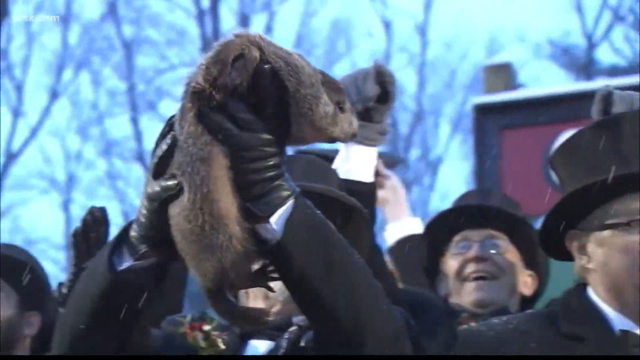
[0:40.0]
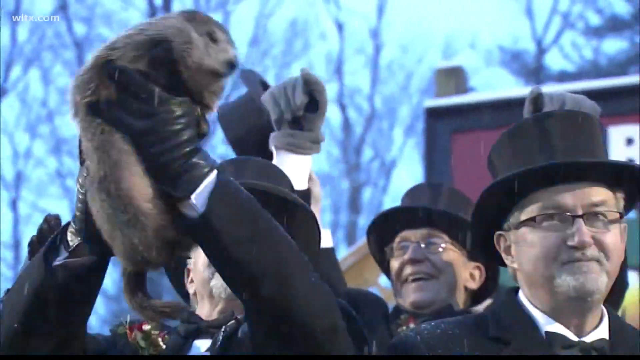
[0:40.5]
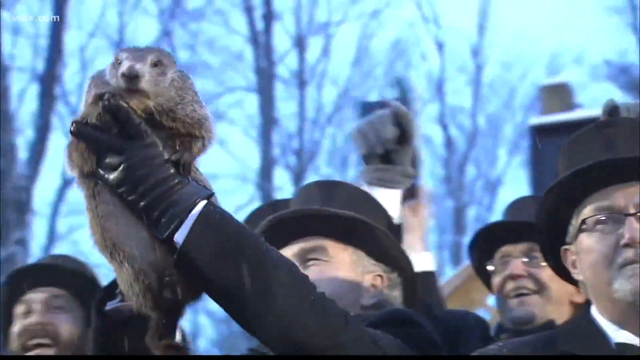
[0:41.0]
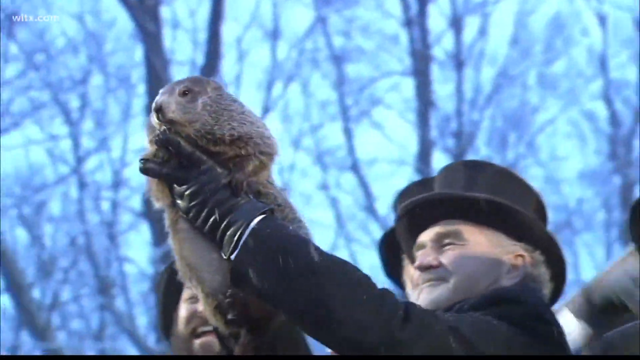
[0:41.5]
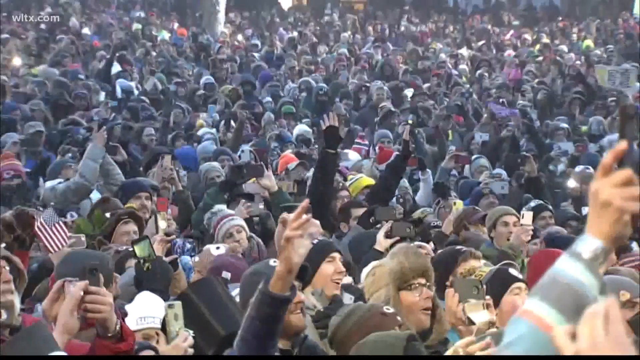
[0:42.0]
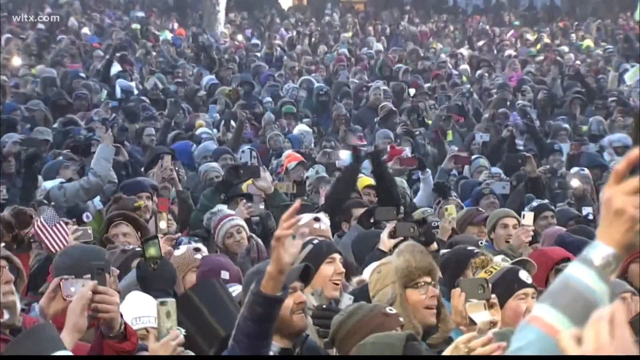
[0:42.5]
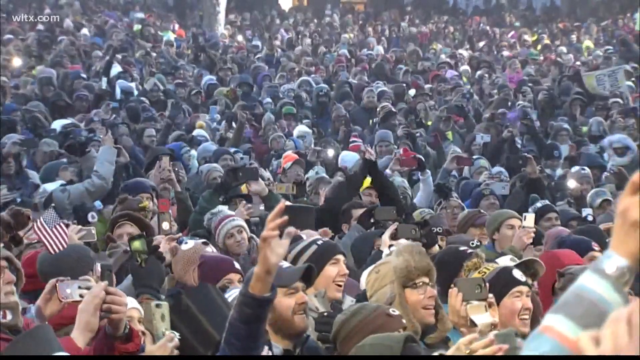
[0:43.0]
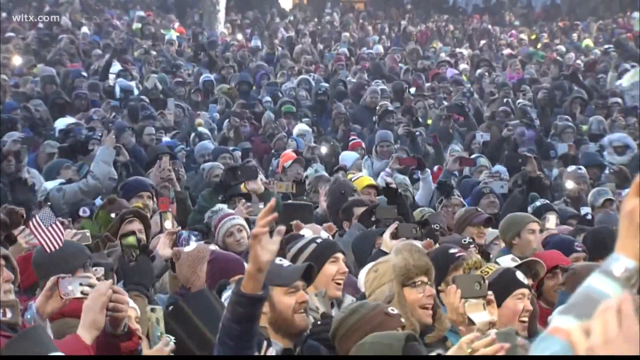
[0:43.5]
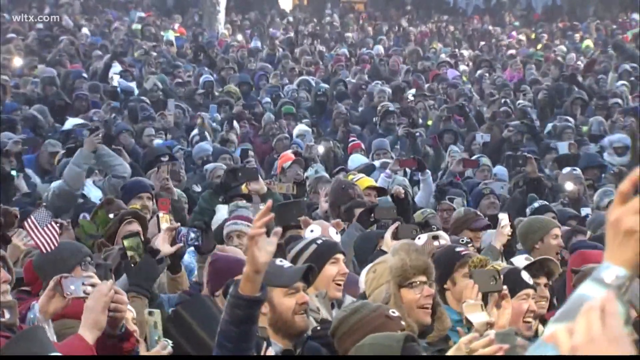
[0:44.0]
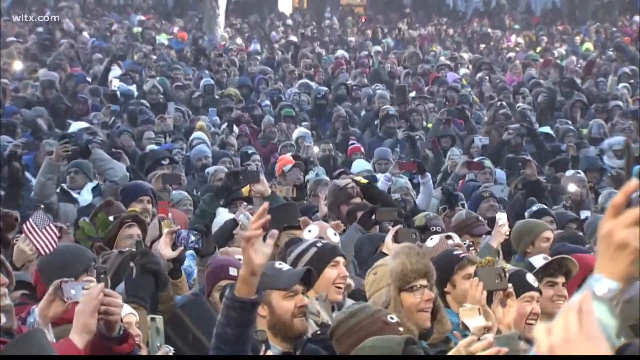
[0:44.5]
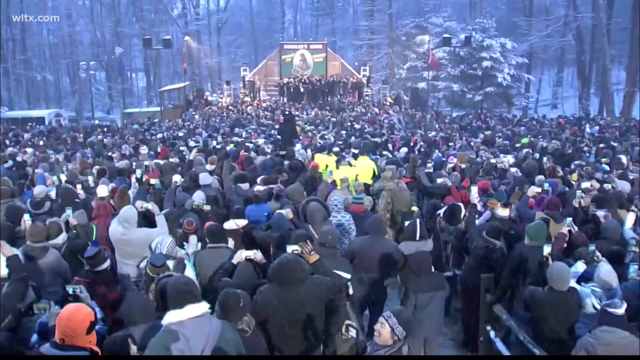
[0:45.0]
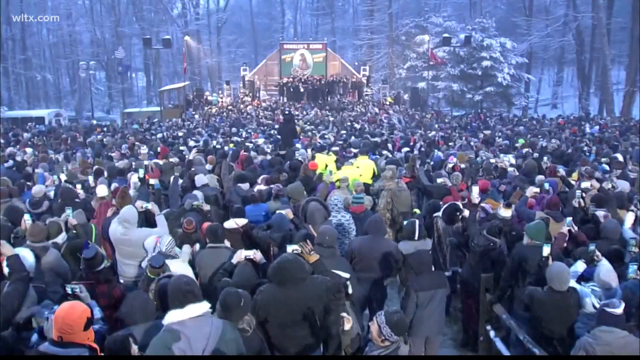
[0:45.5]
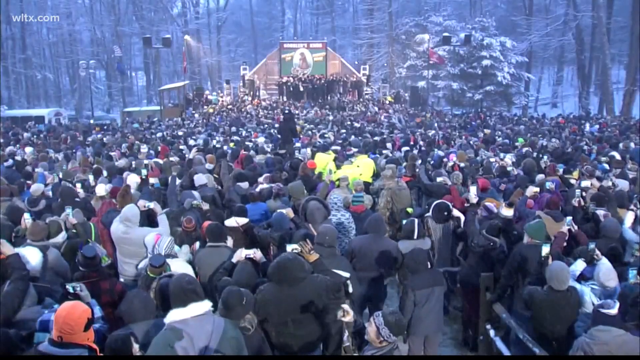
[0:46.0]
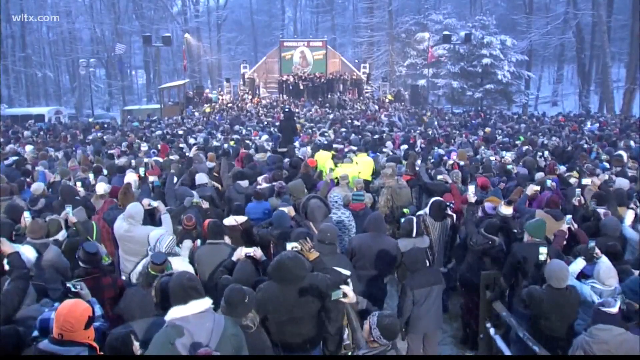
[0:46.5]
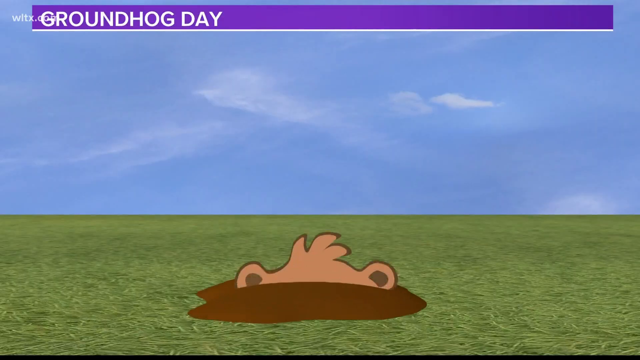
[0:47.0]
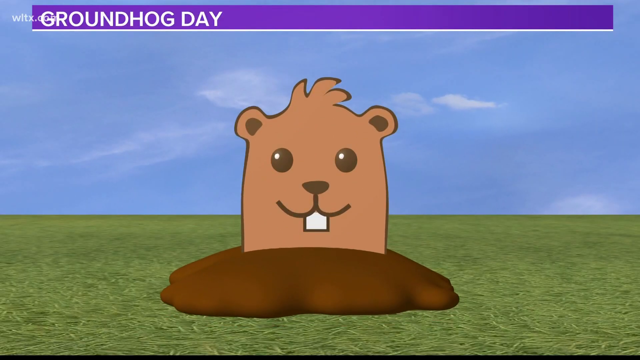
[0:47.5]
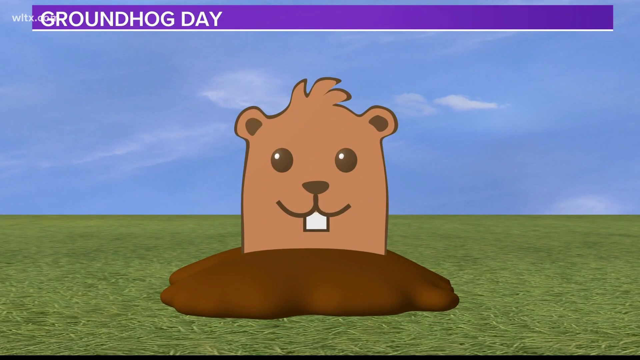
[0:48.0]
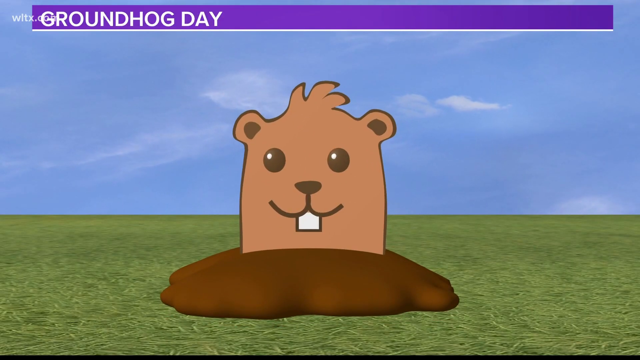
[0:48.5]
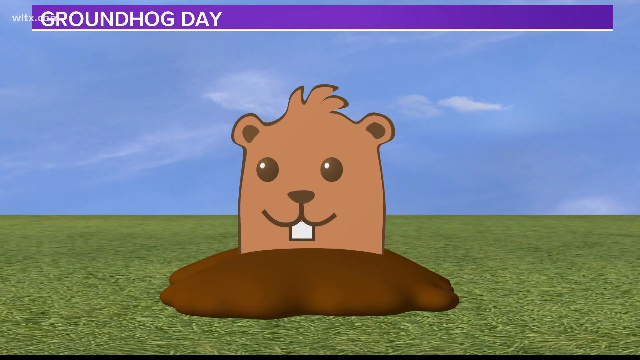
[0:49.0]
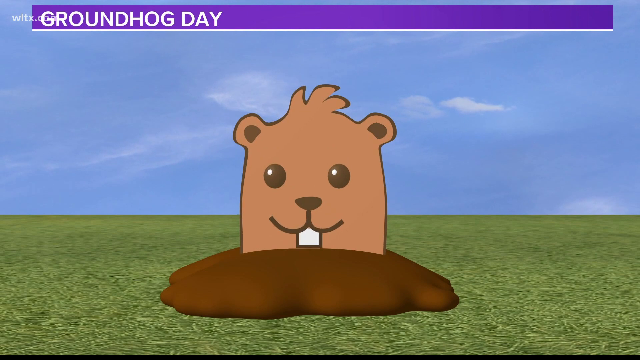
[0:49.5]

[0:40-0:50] A man holds up a groundhog, the famous groundhog Phil from Gobbler's Knob. A crowd of maybe 10,000 people, maybe more, is shown; they all have their hands up and are taking pictures with their phones. A view of the crowd shows trees in the background with no leaves, all bare, and snow everywhere. The stage, or maybe a makeshift podium, where the men stand holding the groundhog is visible. The video then switches to an animated cartoon of the groundhog for Groundhog Day.